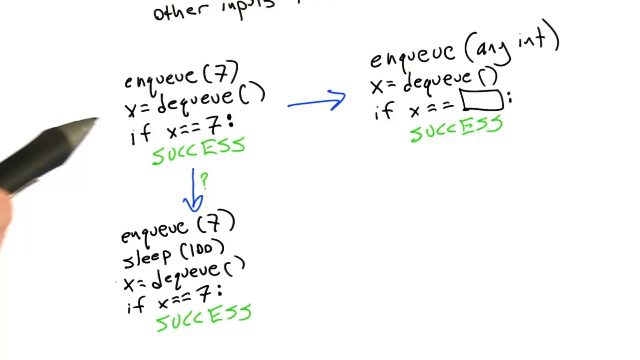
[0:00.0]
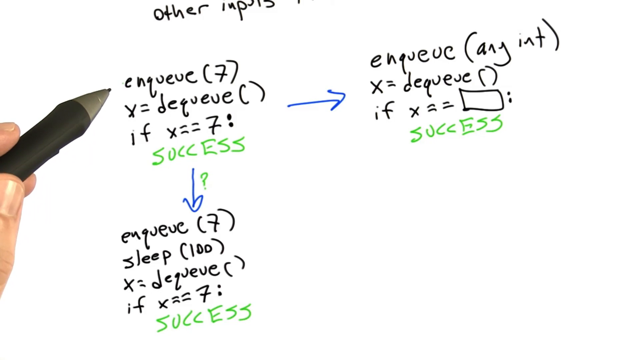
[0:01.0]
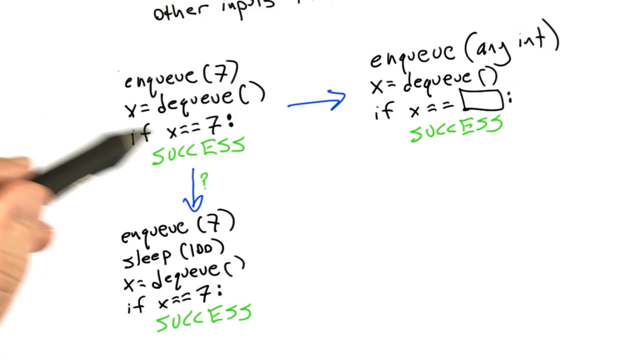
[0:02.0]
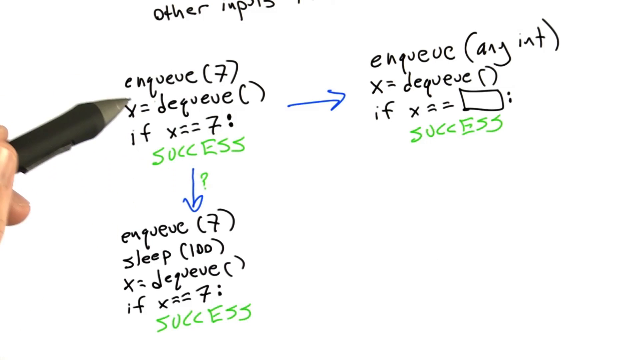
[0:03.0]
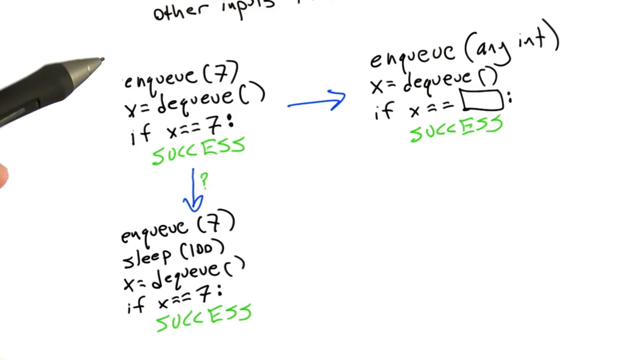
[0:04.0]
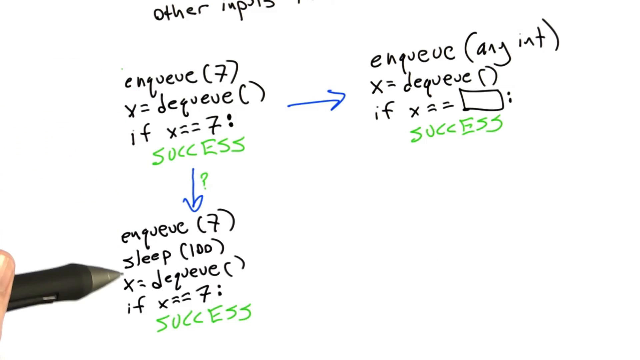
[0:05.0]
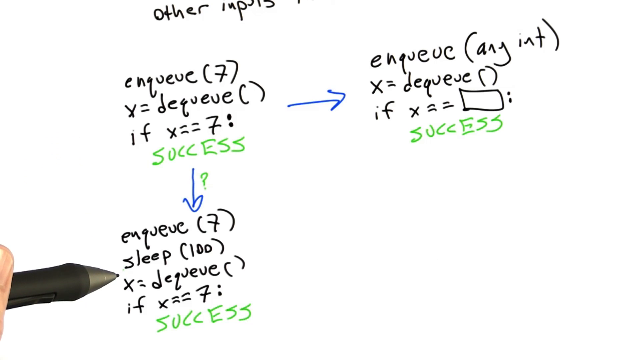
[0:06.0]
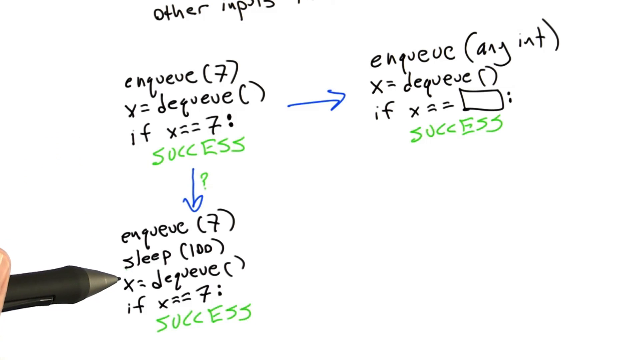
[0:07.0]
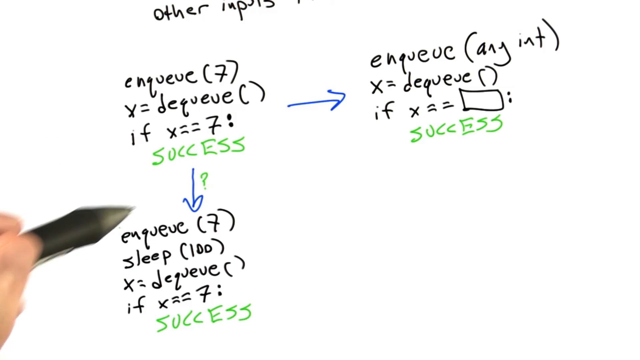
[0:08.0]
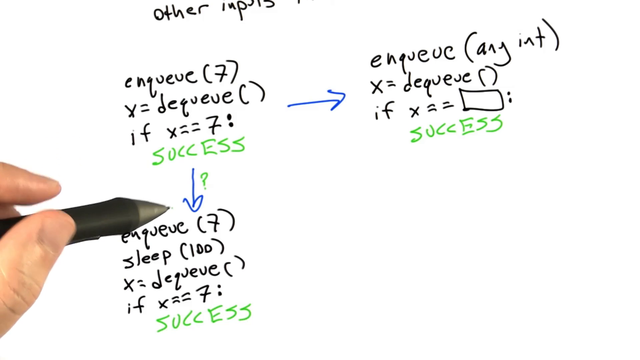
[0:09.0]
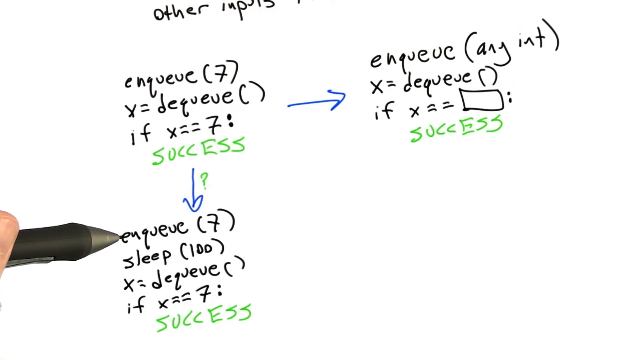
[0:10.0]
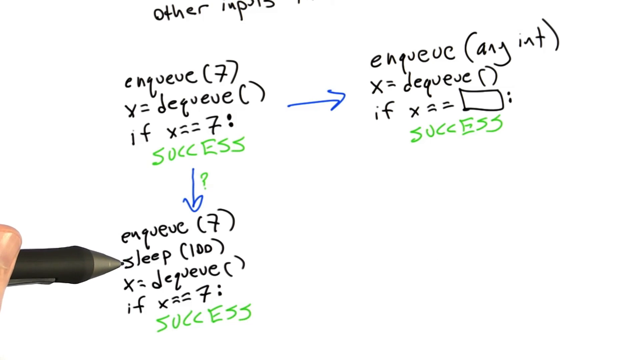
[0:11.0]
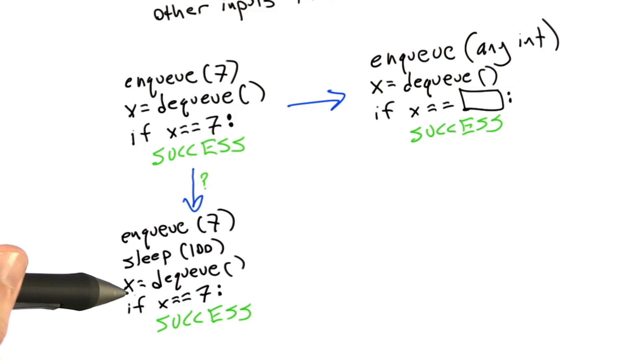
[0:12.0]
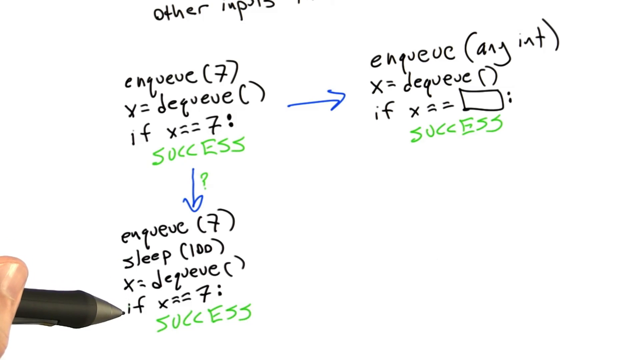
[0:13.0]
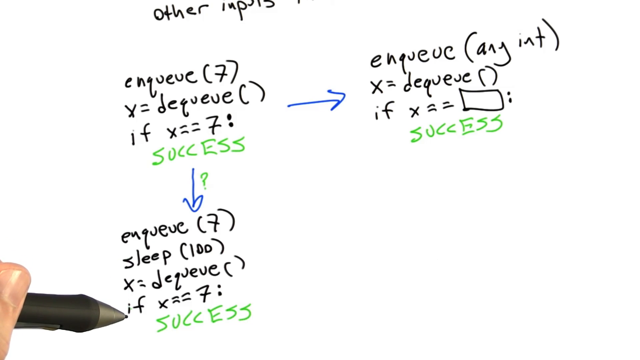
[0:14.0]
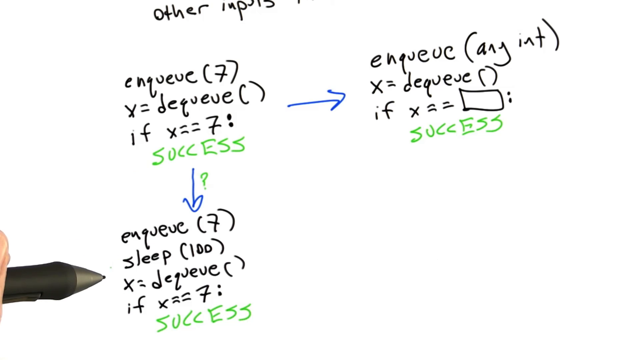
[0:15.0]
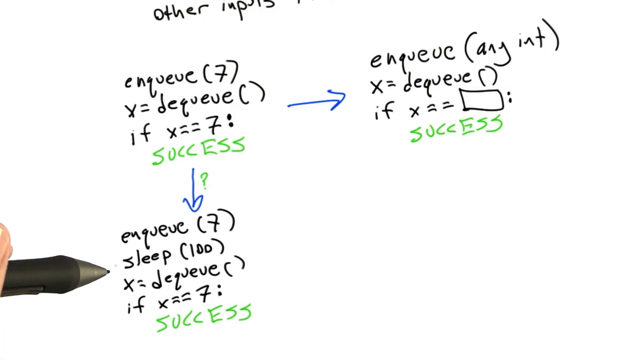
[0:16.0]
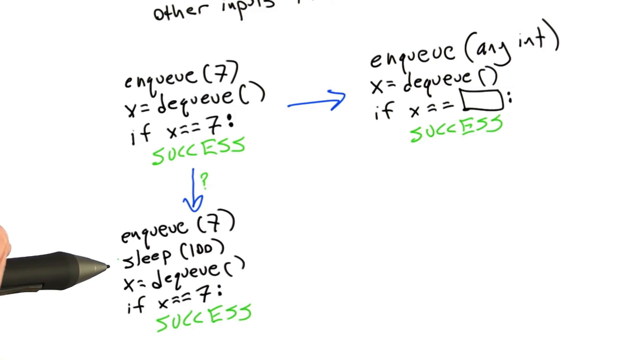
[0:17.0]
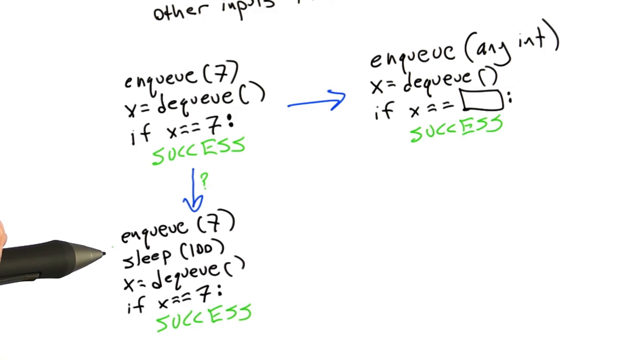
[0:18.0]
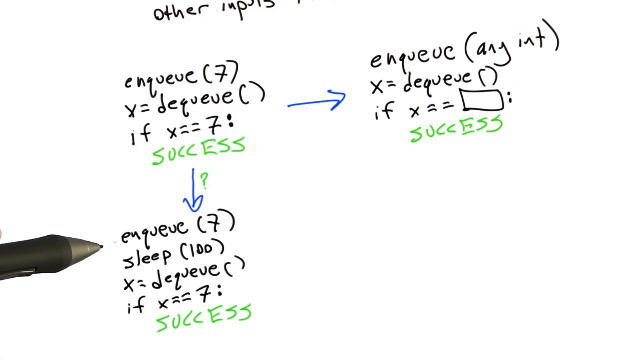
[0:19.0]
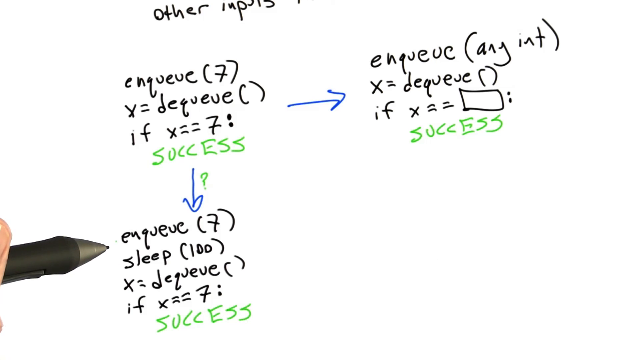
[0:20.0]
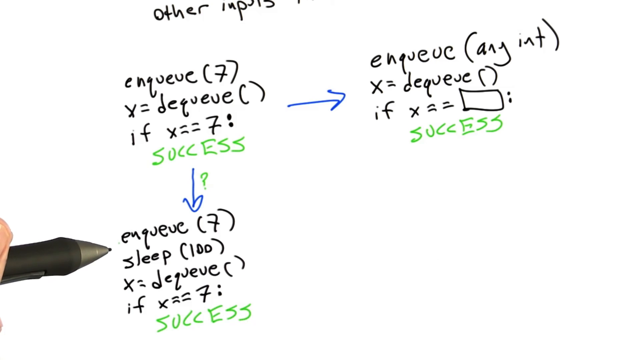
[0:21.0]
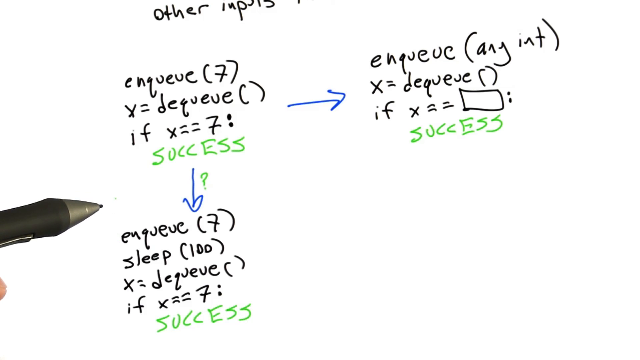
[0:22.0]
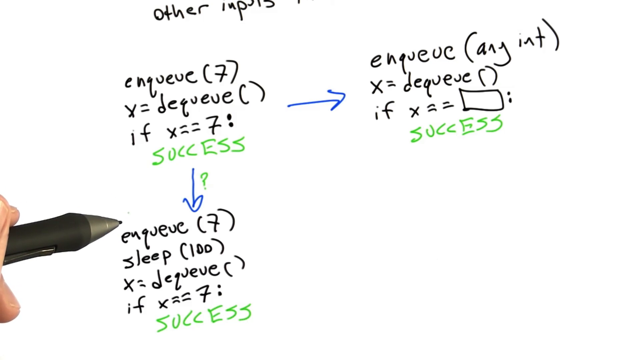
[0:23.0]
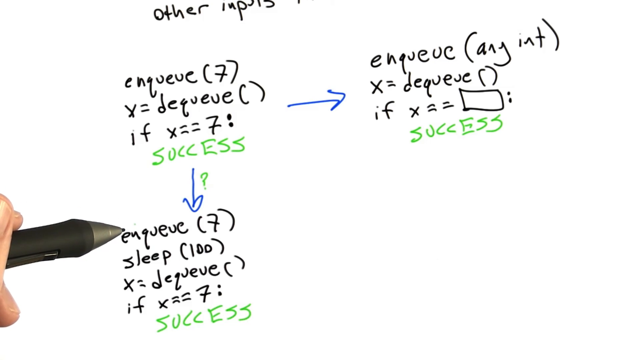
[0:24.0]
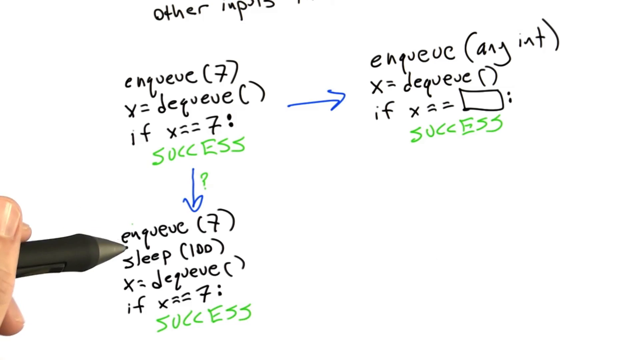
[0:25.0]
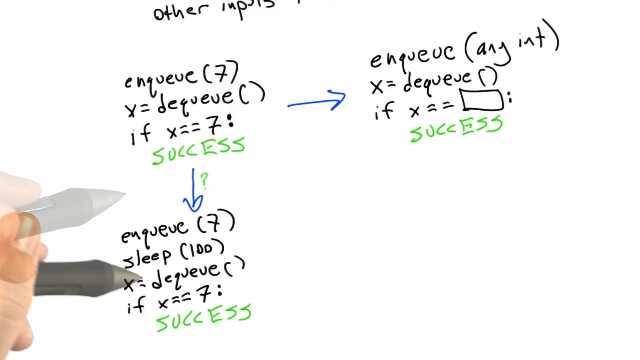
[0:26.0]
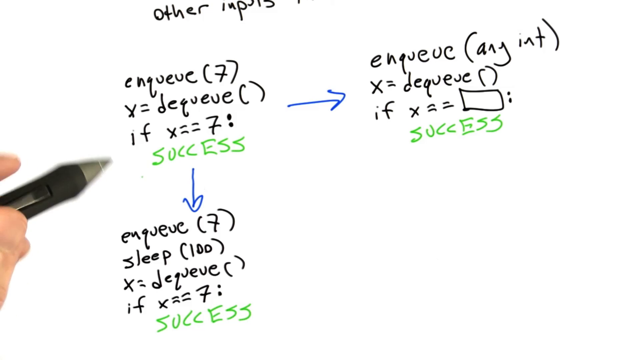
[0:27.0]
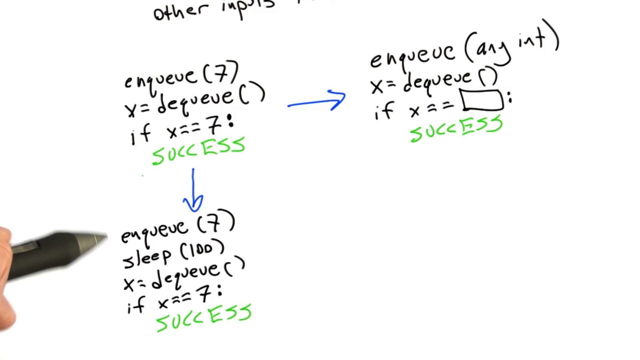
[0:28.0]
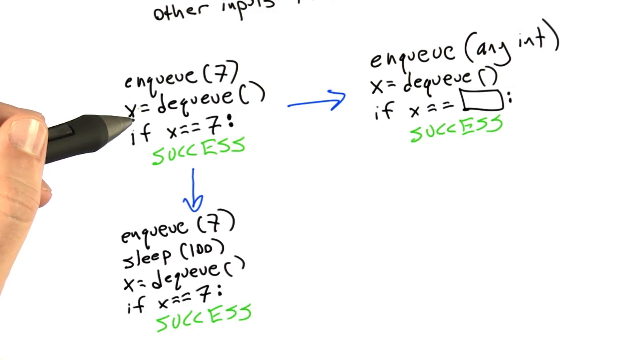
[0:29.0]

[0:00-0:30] Three equations are written on a white background. All three have the word "SUCCESS" written at the bottom. In the left-hand corner, someone holds a pen; only part of a thumb and a black pen are visible. Above the equations are the words "other inputs". One arrow points from the first equation to the second, and another arrow runs from the bottom of the first equation to the third. The only legible word in the equations is "sleep", in the third equation. The person points to the first equation and circles it with the pen without writing on the paper. The person then points to the bottom equation, indicating the words written on it, and draws semicircles around it, again without marking the paper. The pen then moves back to the top equation.